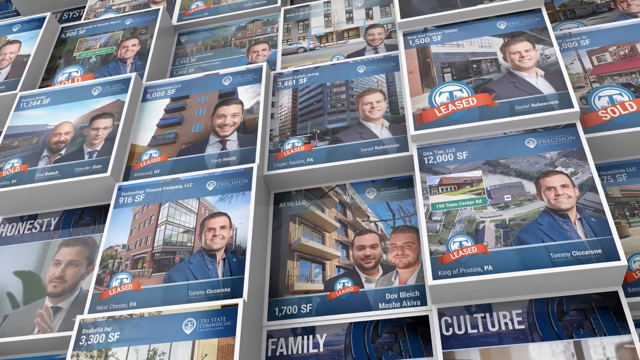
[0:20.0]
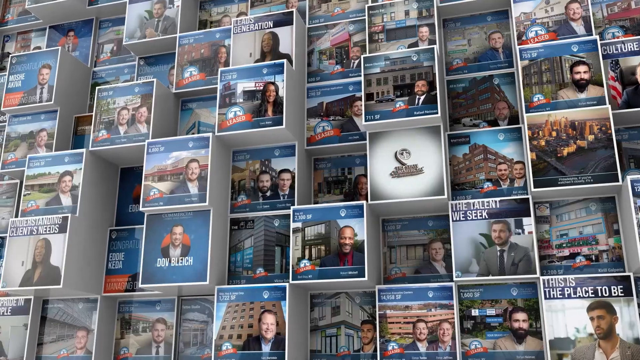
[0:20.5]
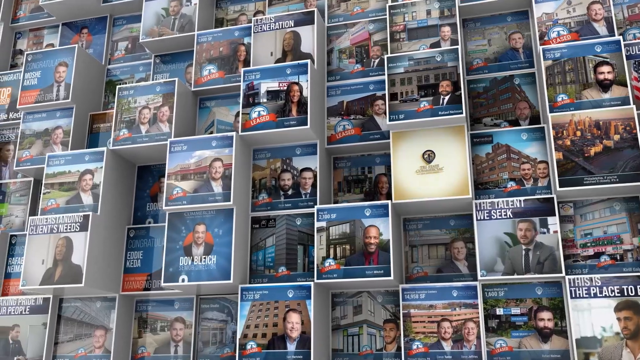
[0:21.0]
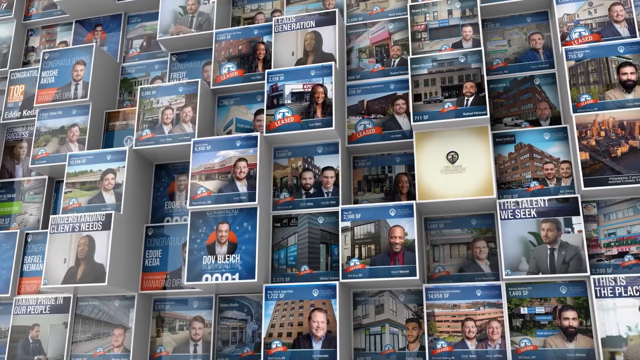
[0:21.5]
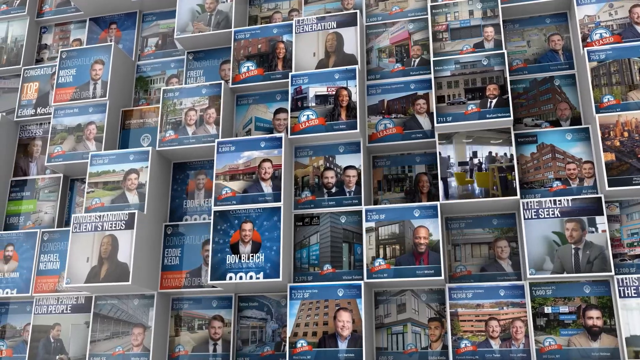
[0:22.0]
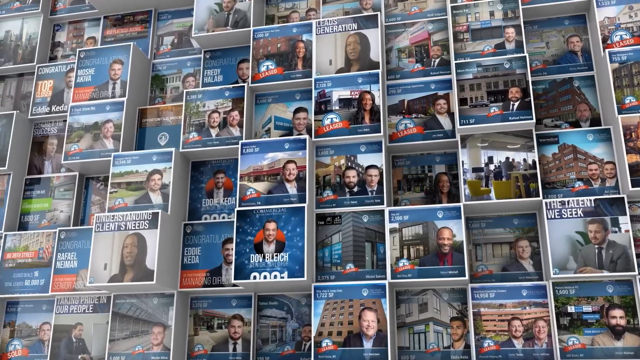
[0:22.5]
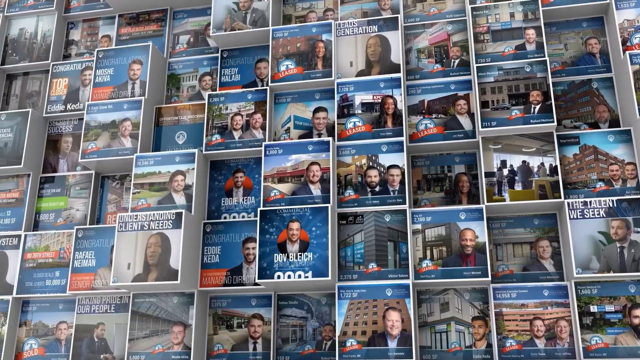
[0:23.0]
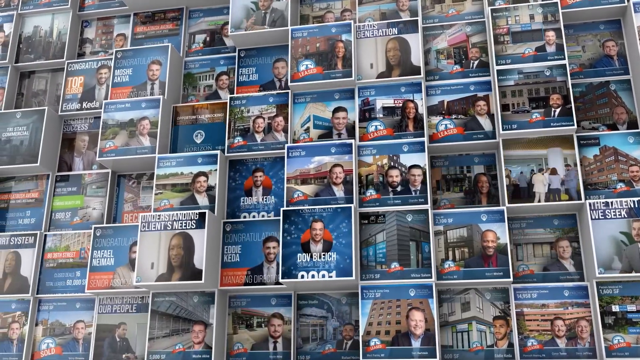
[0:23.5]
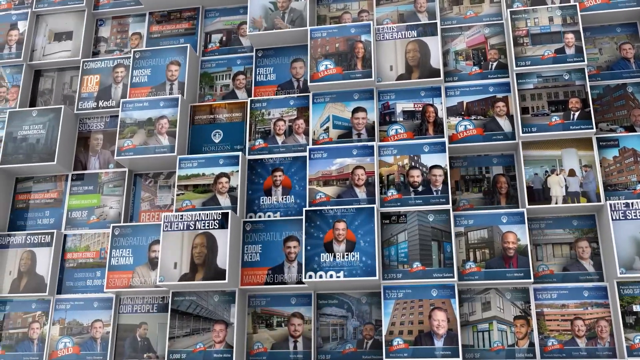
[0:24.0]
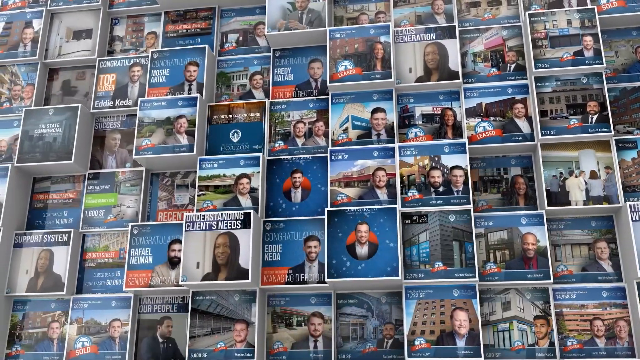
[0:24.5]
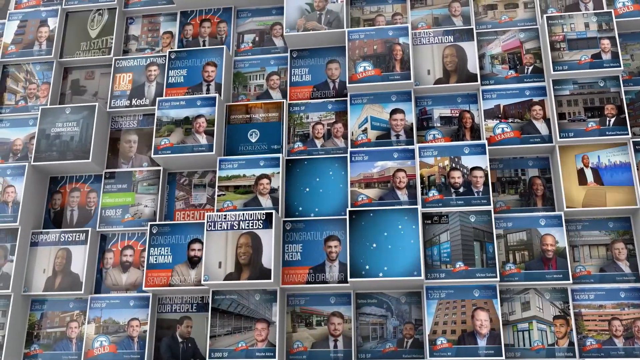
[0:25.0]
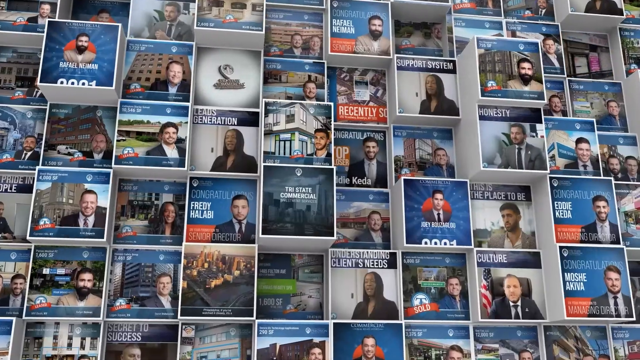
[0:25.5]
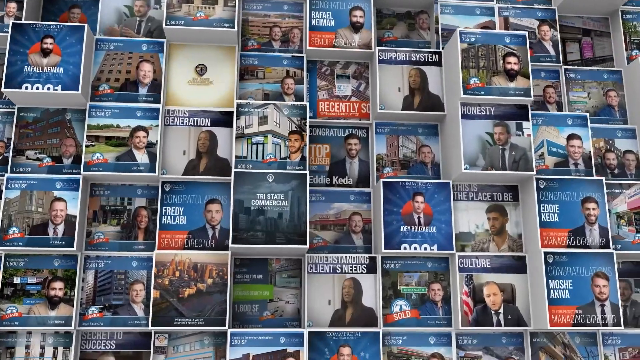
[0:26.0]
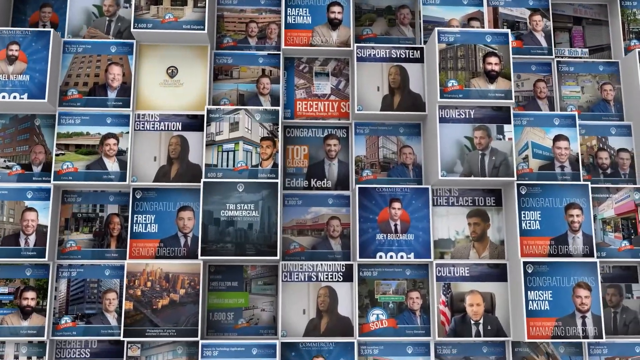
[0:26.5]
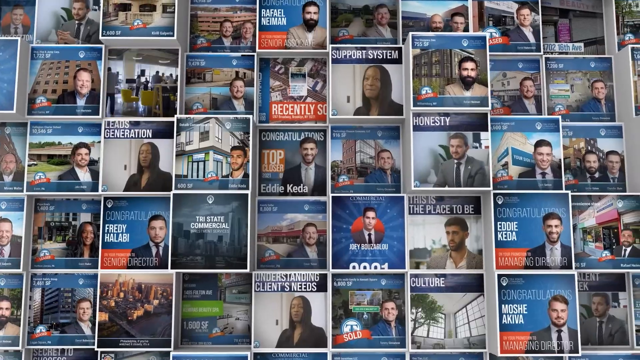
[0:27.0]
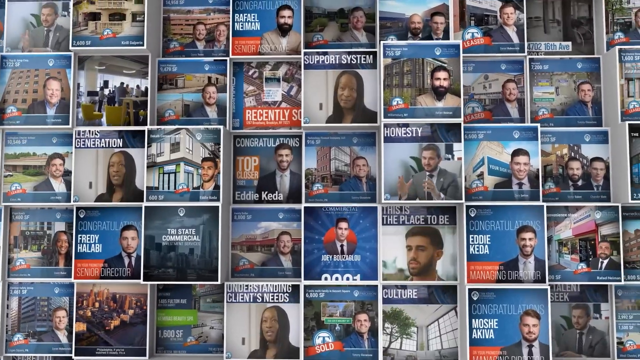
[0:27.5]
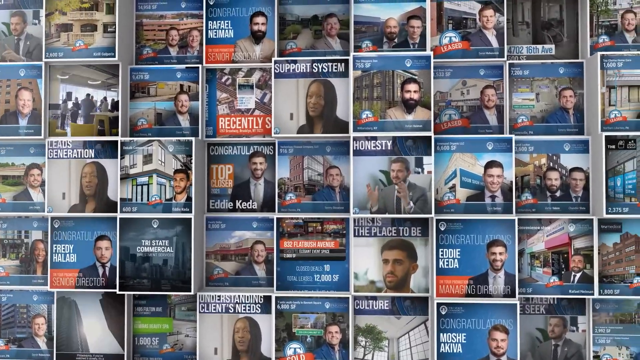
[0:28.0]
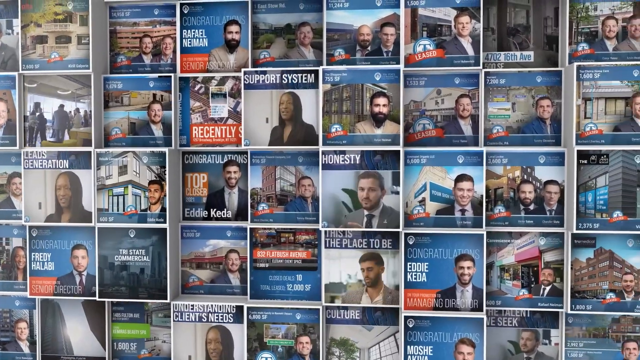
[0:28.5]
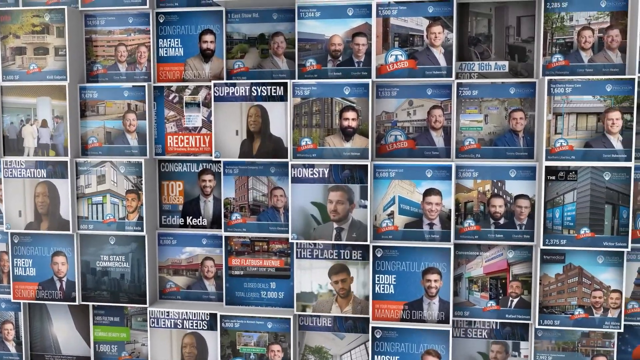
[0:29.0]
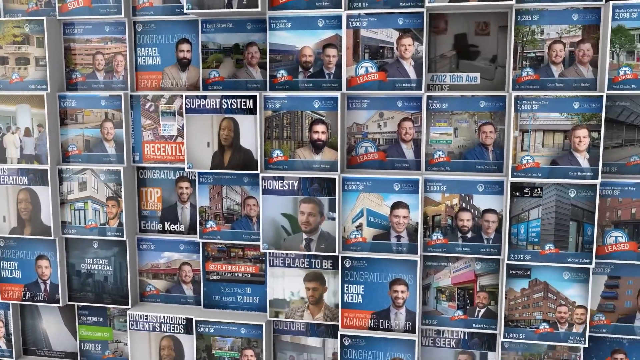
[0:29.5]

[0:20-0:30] The same digital real estate posters are seen from a distance, with a great number of them visible. Some say "support system" and some say "honesty"; each has different highlights. Some have the red banner saying "leased" or "sold," but not all of them. Some posters have highlighted words, such as that the employee understands clients' needs, and some show the names of the employees at the business.